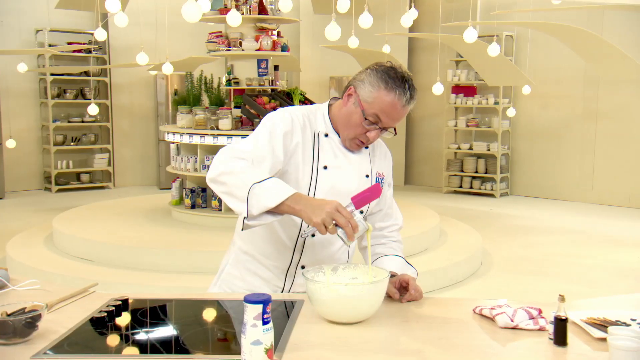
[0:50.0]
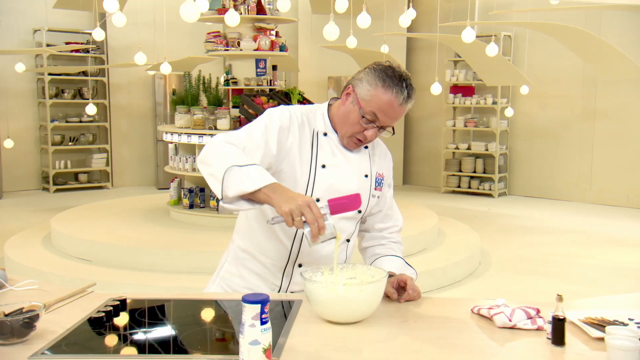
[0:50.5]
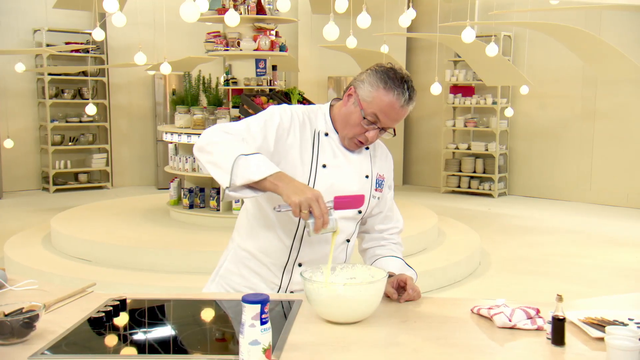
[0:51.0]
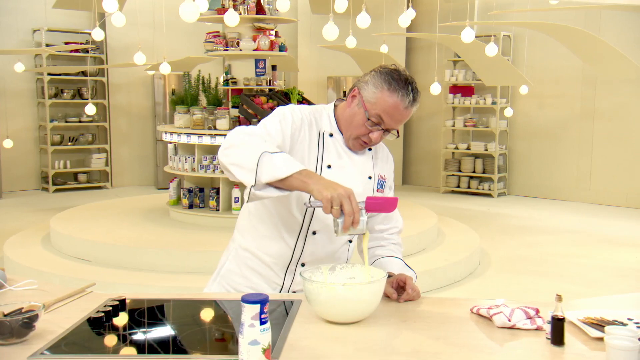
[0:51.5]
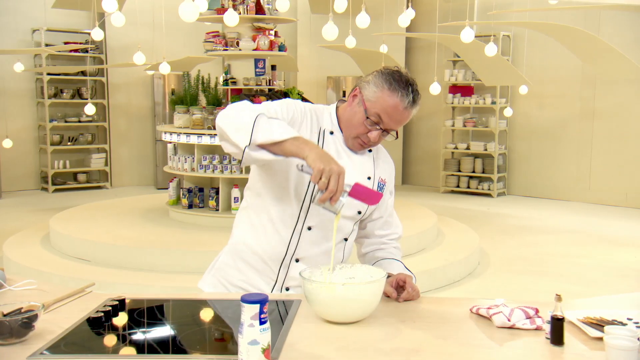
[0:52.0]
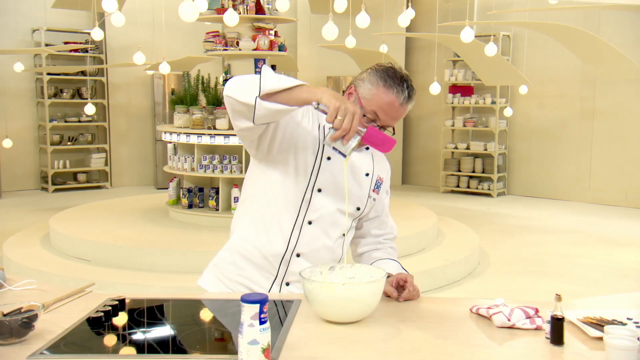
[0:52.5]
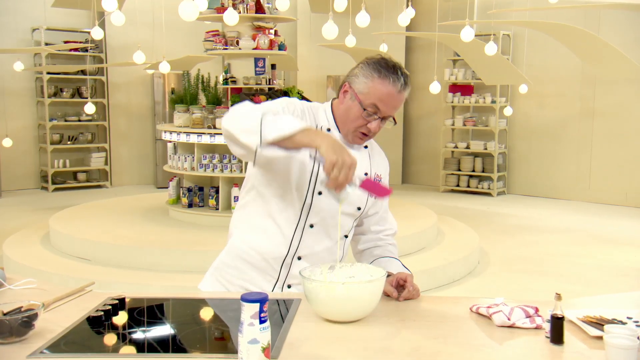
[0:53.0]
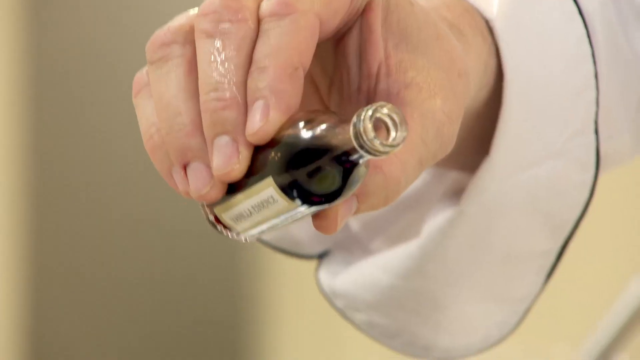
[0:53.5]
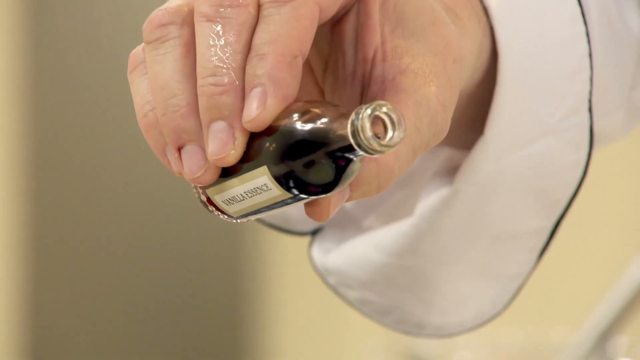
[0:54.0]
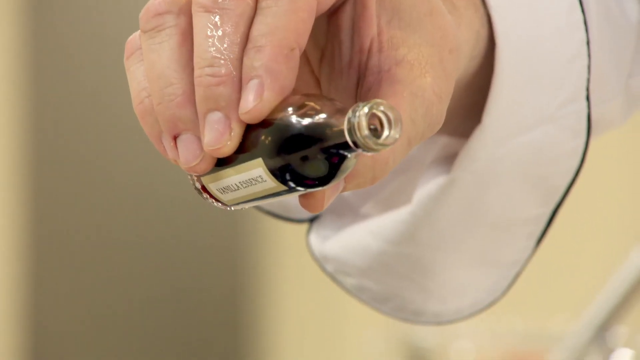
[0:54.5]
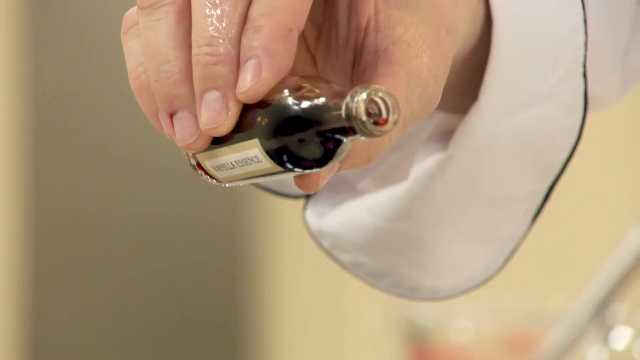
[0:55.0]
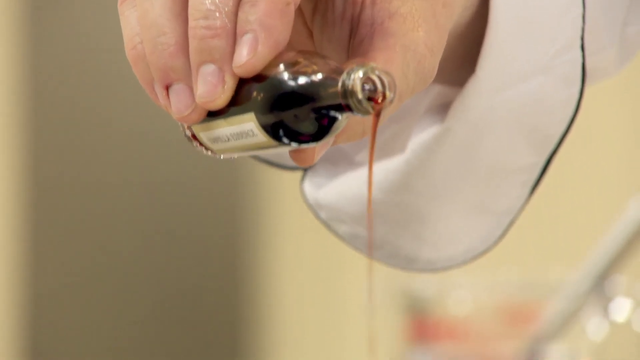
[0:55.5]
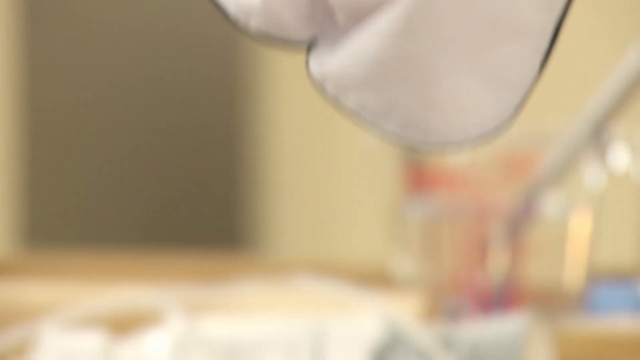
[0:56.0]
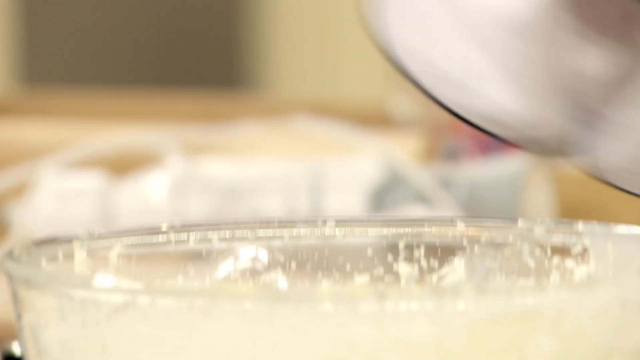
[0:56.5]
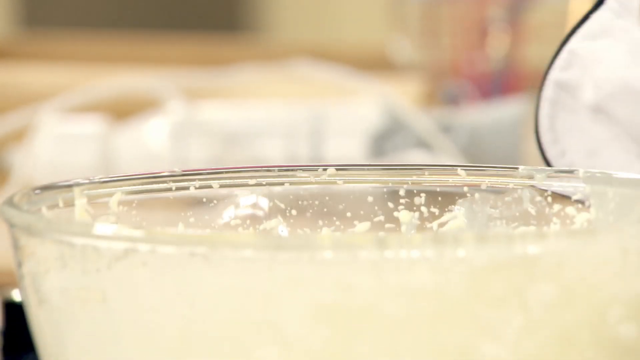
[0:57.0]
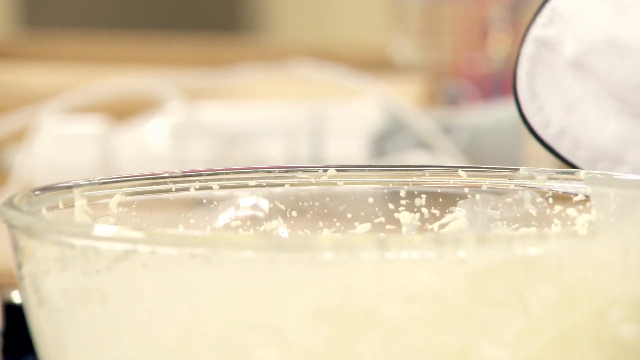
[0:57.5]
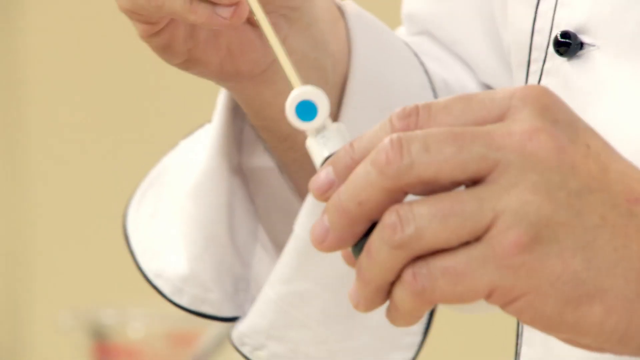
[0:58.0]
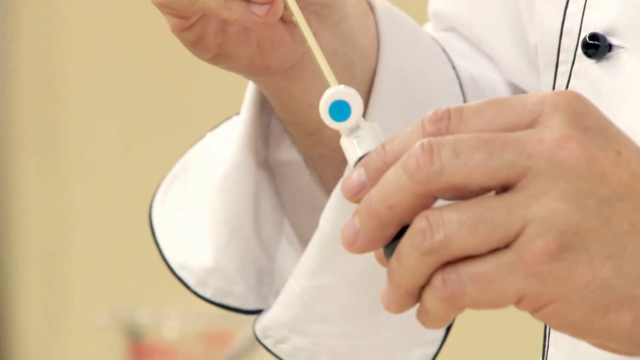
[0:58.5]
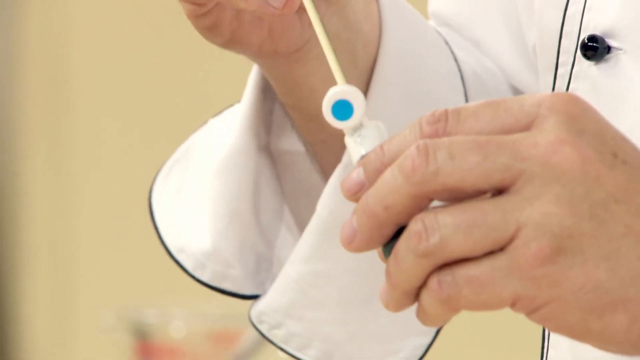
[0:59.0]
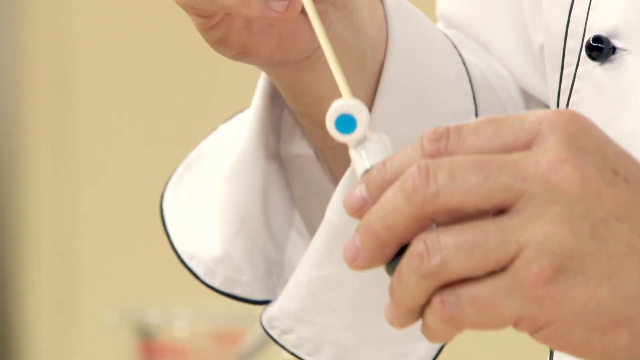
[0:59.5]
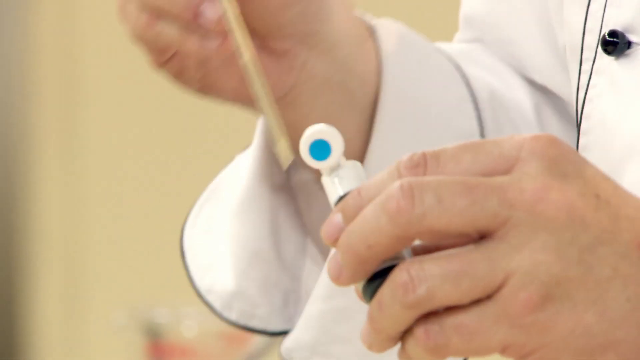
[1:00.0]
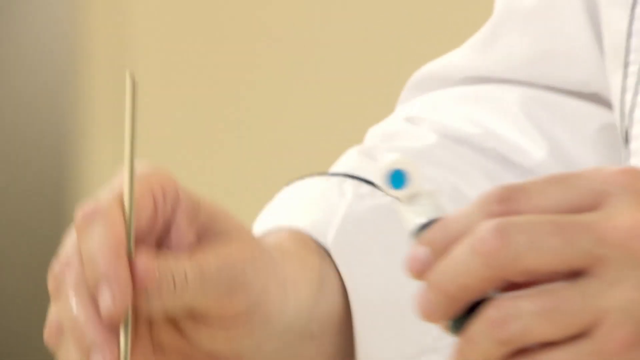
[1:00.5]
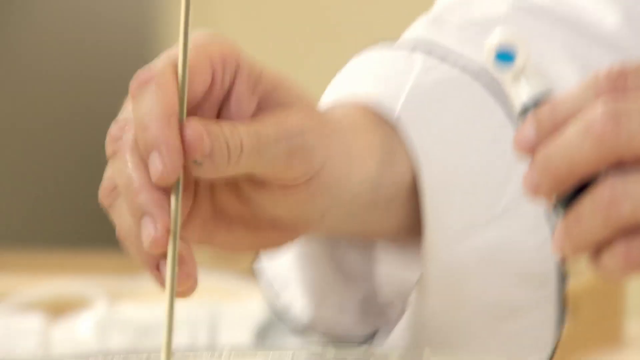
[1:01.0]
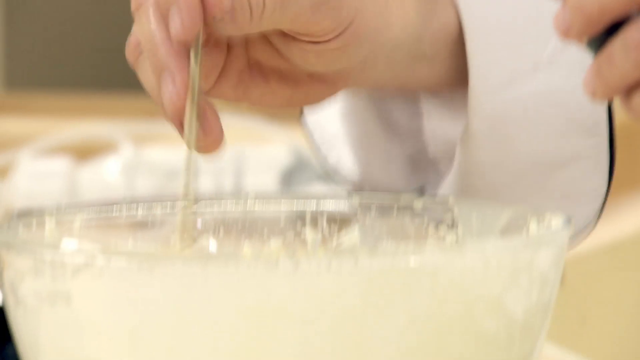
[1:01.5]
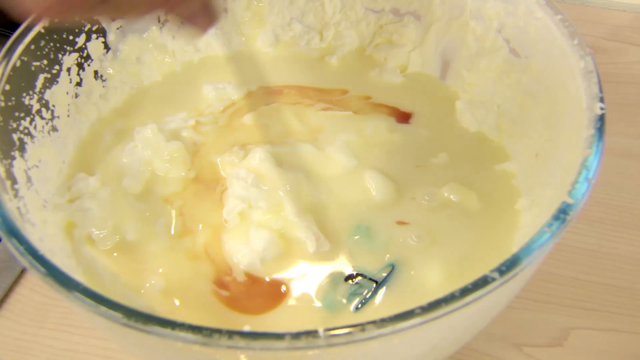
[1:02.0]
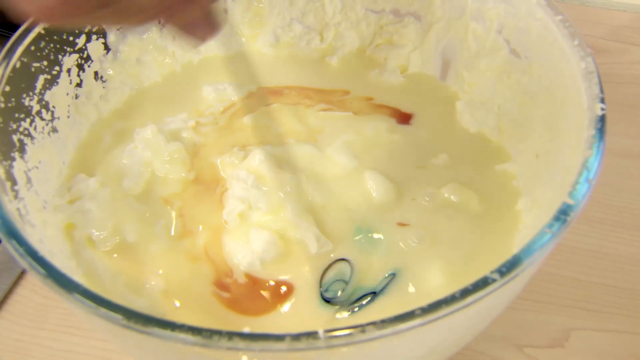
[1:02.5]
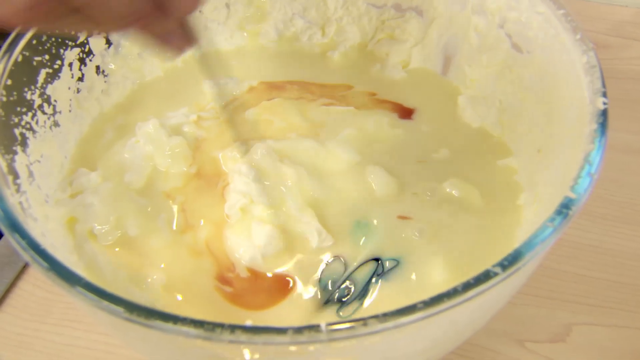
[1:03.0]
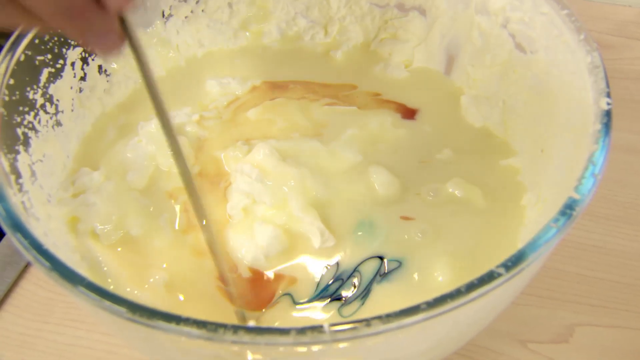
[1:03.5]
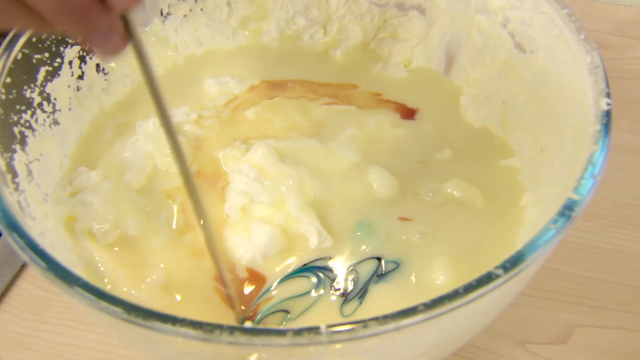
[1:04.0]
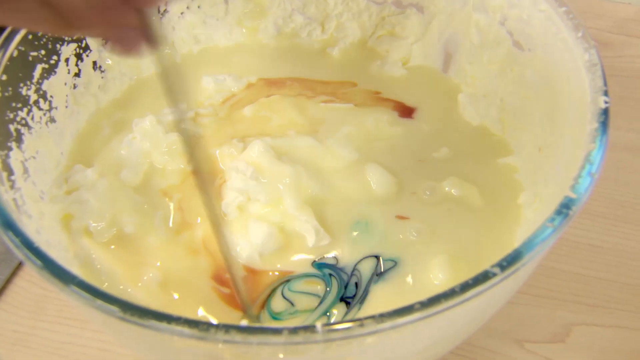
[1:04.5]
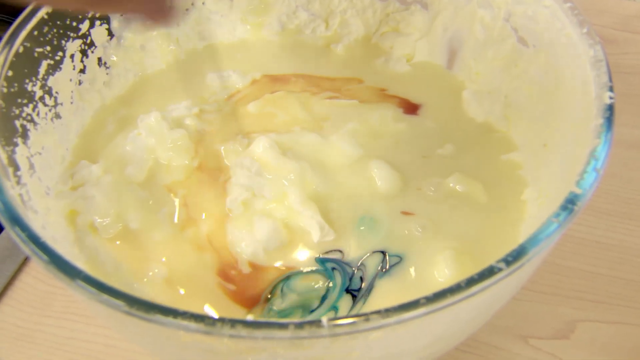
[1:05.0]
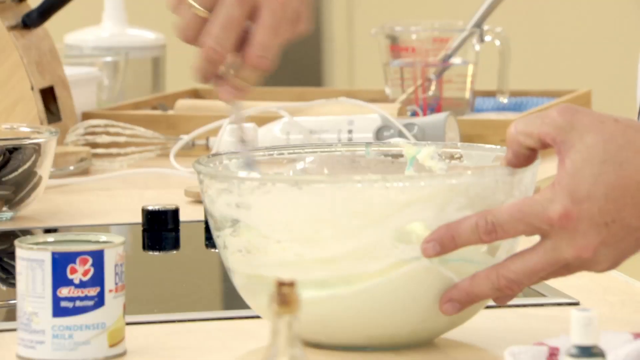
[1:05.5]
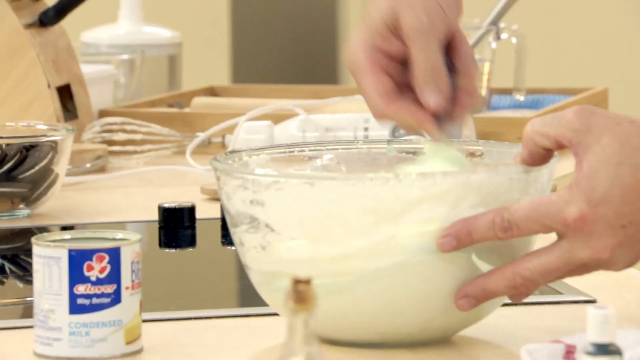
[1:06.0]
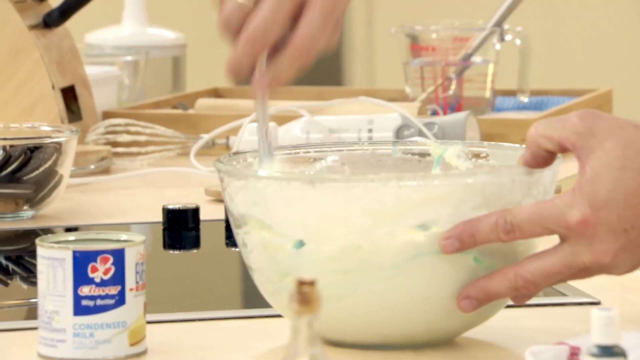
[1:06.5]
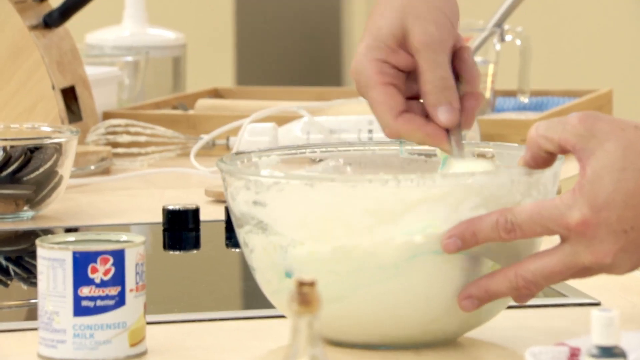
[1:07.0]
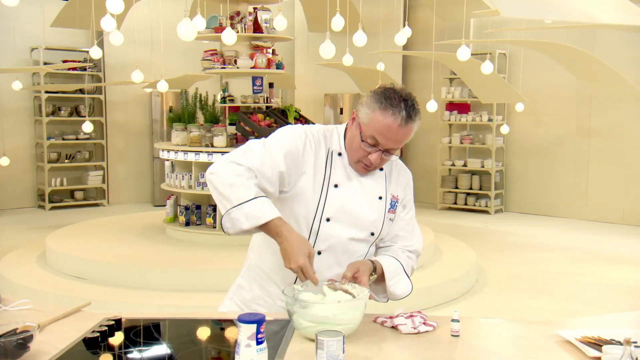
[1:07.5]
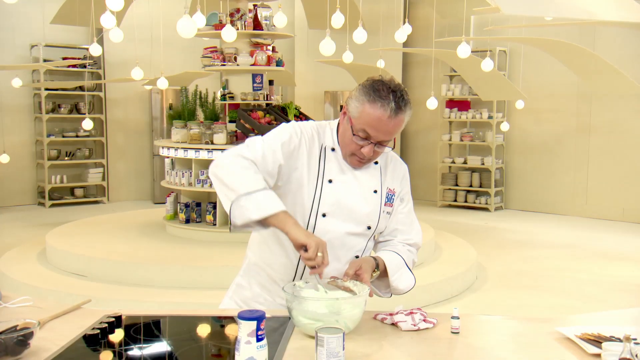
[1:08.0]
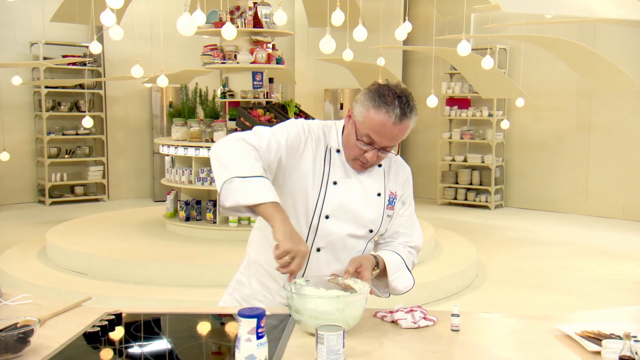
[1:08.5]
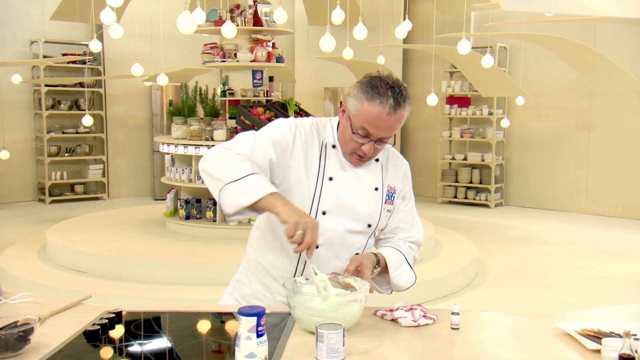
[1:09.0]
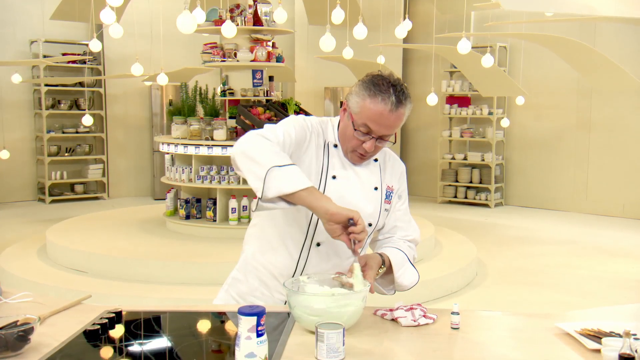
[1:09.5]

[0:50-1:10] The chef pours condensed milk into the bowl of whipped cream while also holding a spatula with a pink rubber end; he moves his hand over the bowl, then lifts his arm and sort of drops more condensed milk into the bowl. His hand then holds a very small bottle of vanilla, and he pours a tiny amount into the bowl. He appears to dip a stick into some food coloring and put it into the bowl of whipped cream and vanilla, moving the coloring around to color the mixture, which looks to have a green hue. He then mixes everything with the spatula in one hand while holding the bowl with the other.